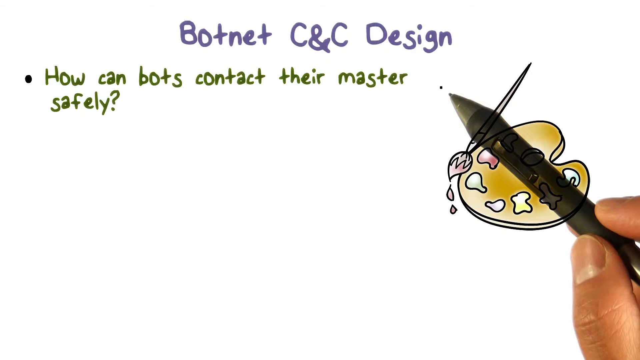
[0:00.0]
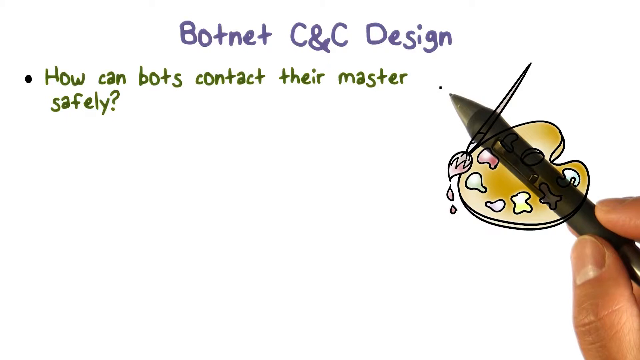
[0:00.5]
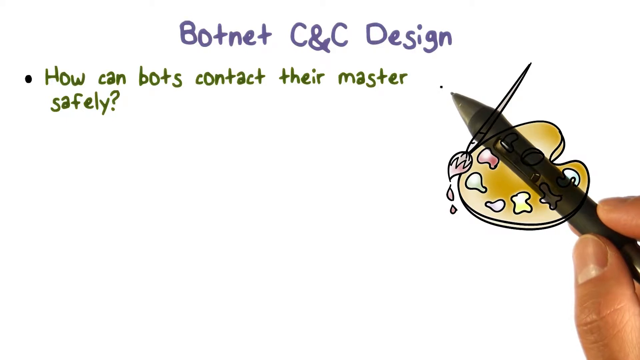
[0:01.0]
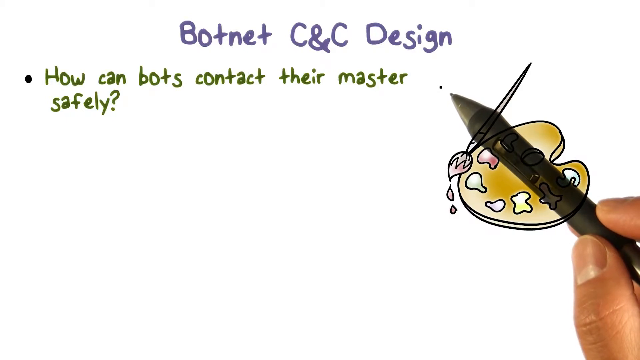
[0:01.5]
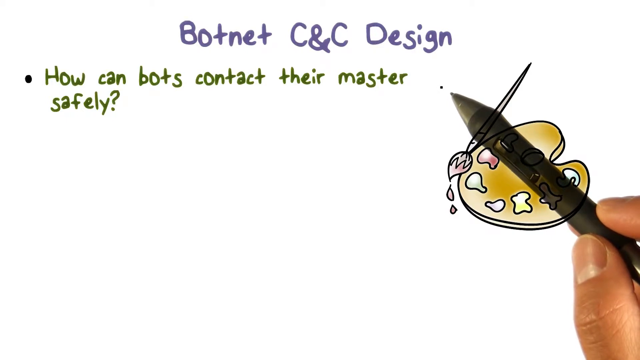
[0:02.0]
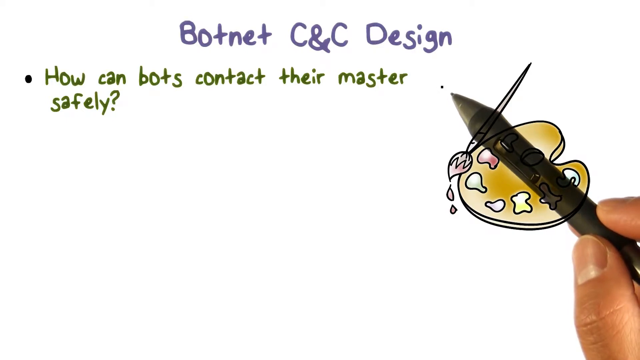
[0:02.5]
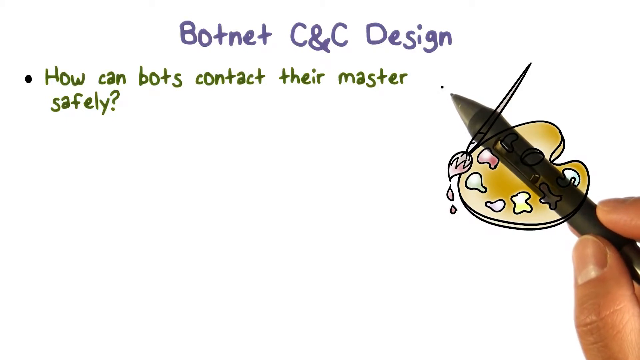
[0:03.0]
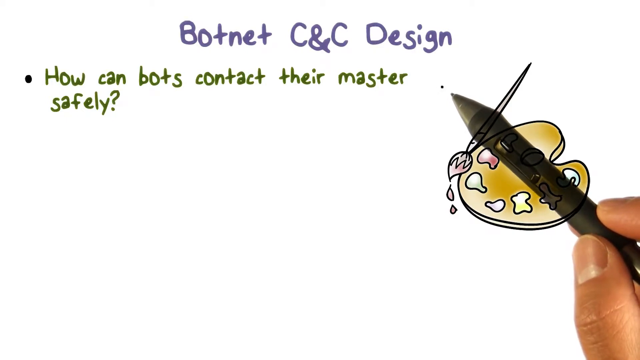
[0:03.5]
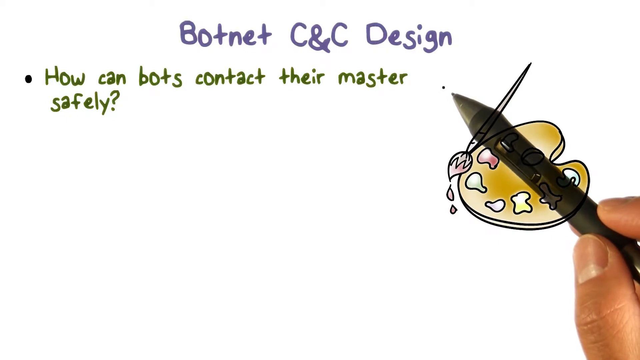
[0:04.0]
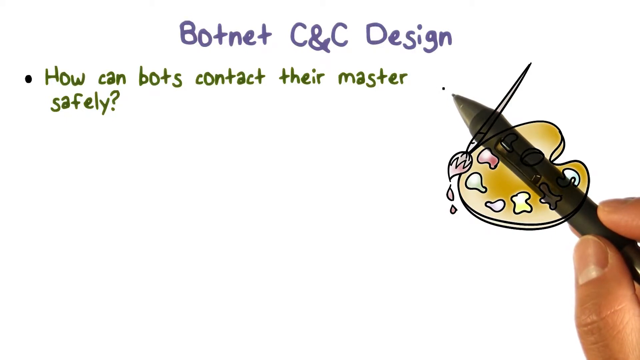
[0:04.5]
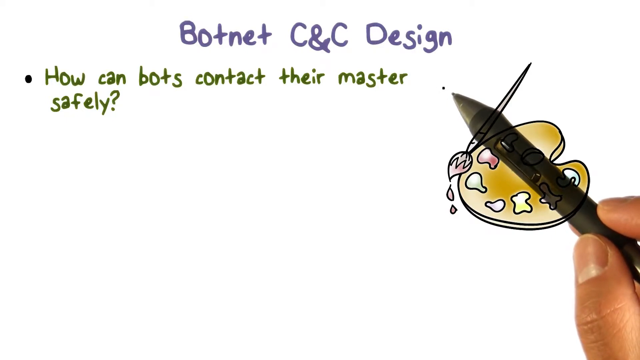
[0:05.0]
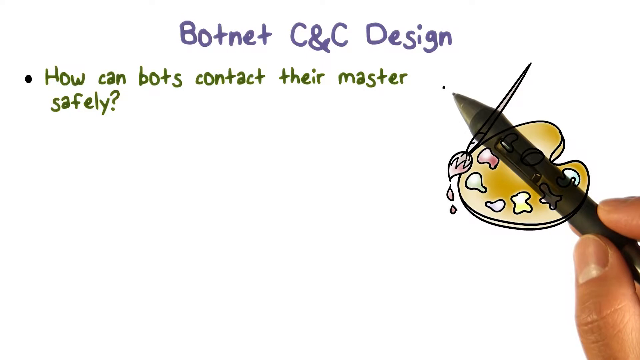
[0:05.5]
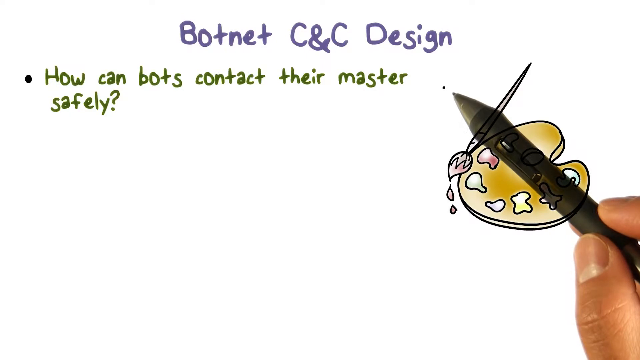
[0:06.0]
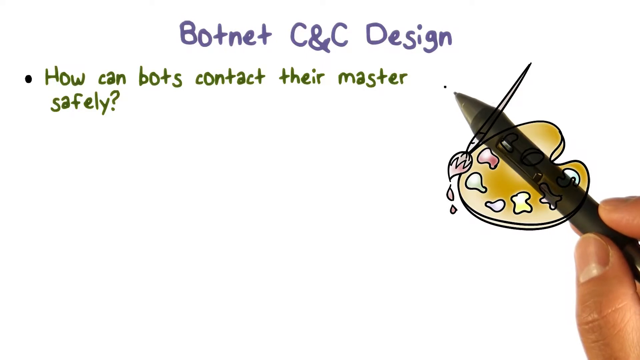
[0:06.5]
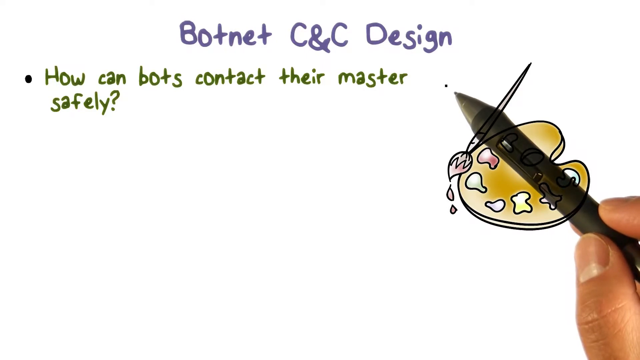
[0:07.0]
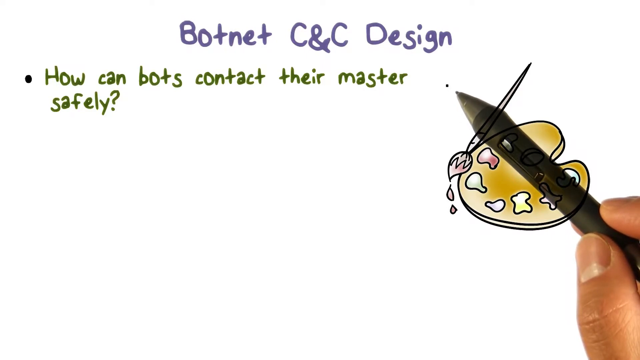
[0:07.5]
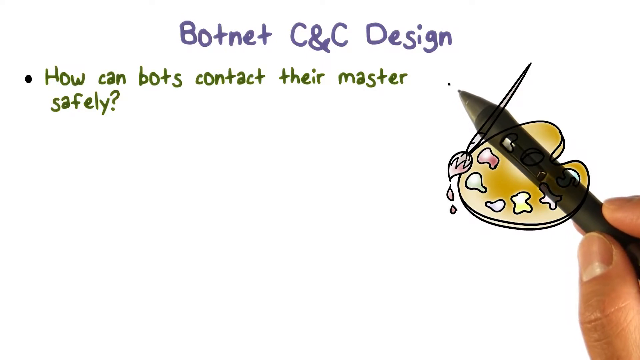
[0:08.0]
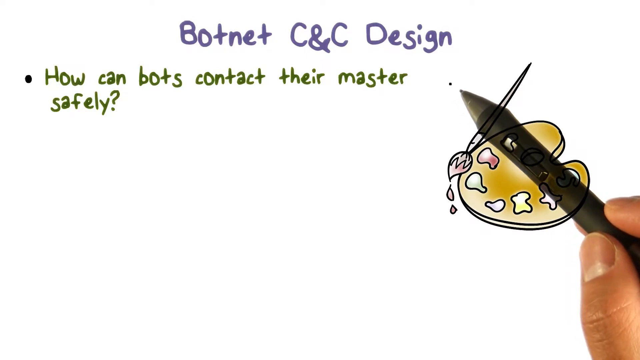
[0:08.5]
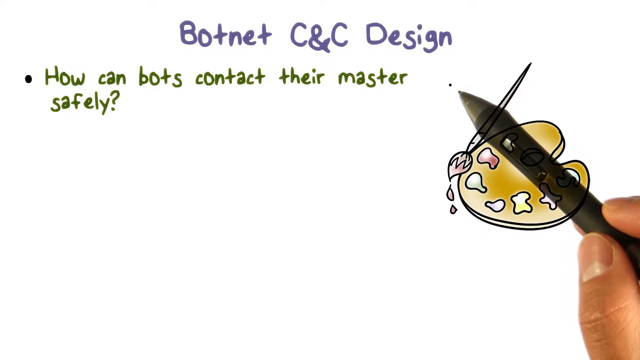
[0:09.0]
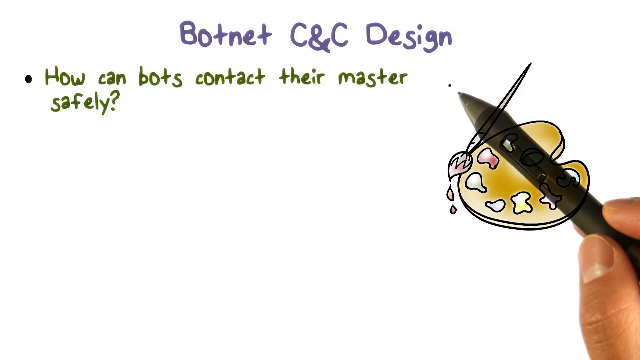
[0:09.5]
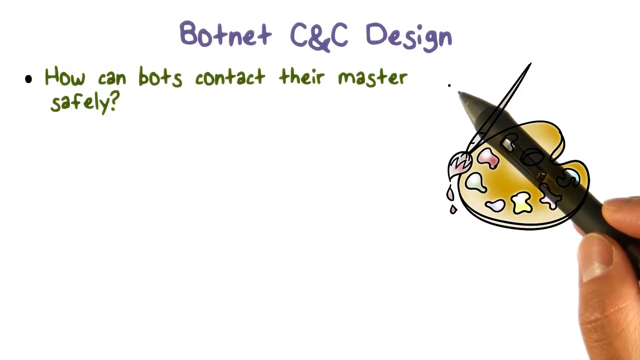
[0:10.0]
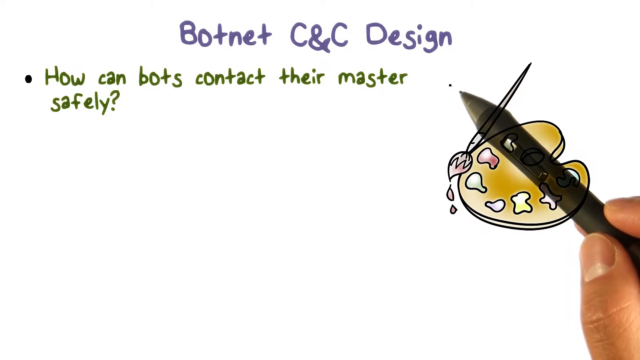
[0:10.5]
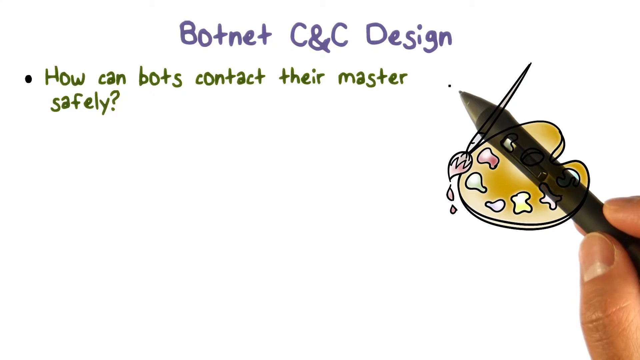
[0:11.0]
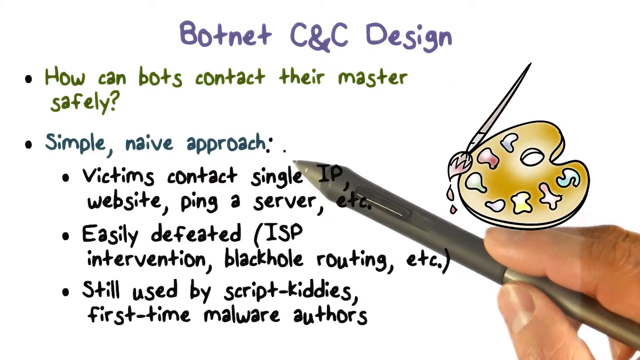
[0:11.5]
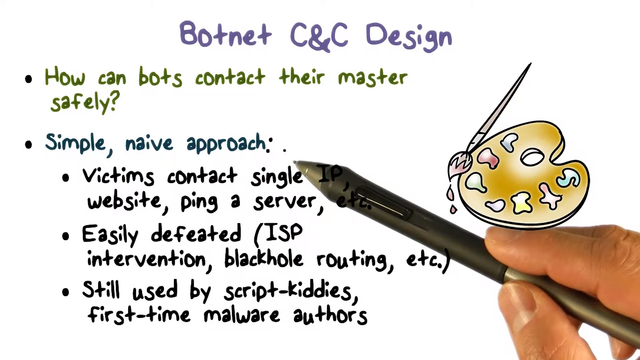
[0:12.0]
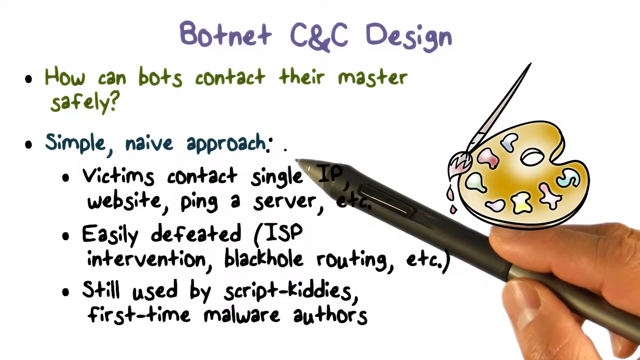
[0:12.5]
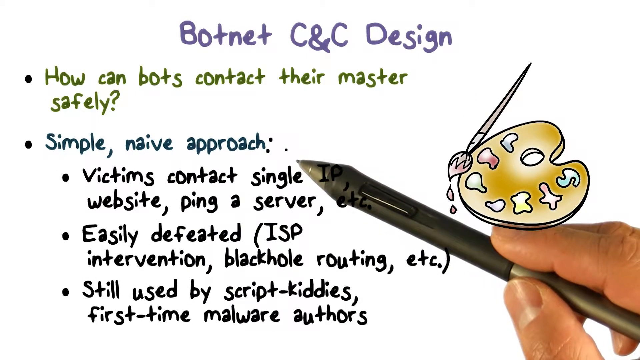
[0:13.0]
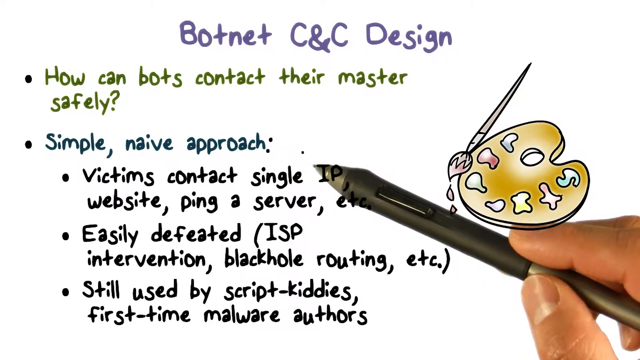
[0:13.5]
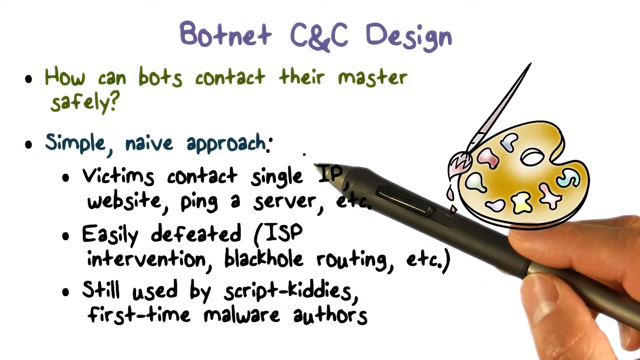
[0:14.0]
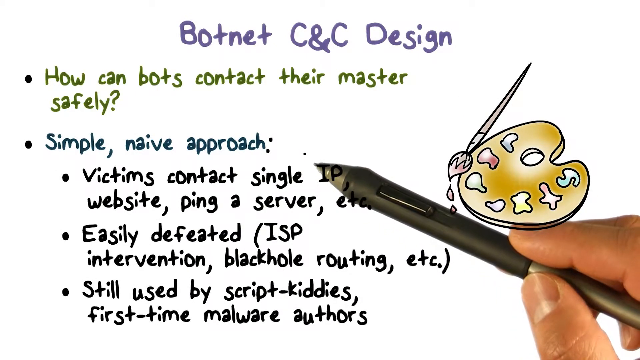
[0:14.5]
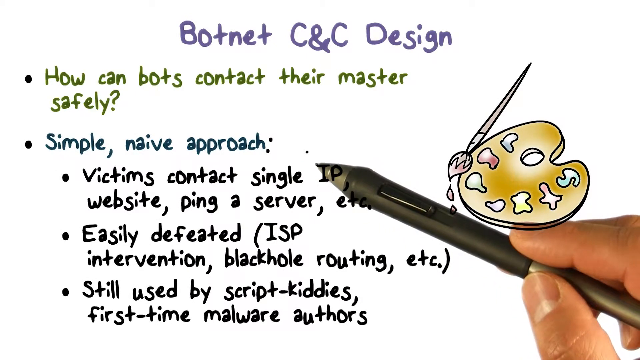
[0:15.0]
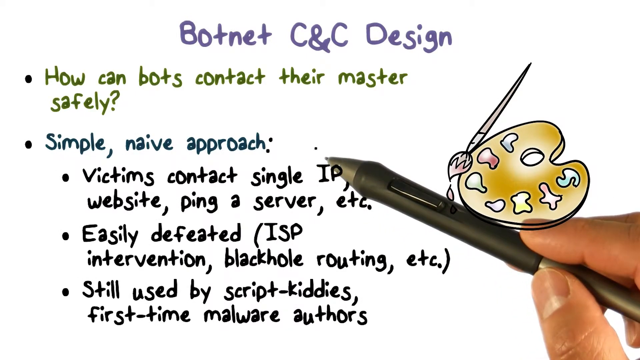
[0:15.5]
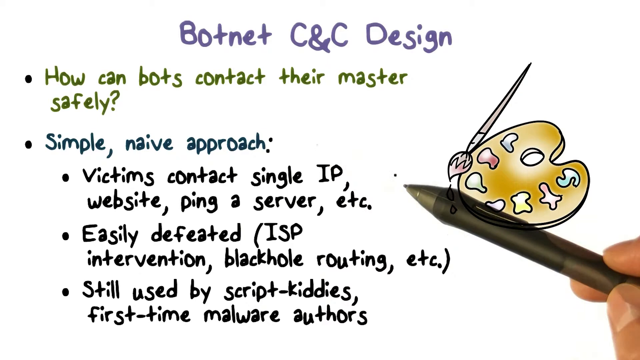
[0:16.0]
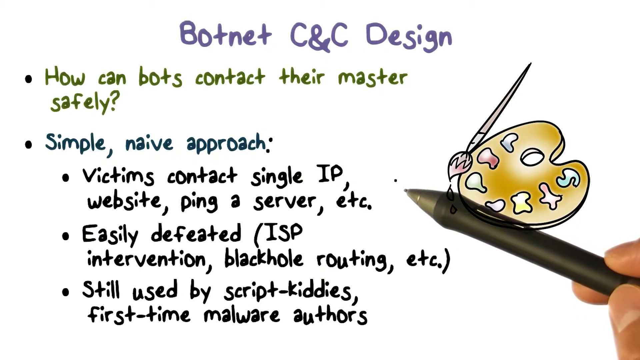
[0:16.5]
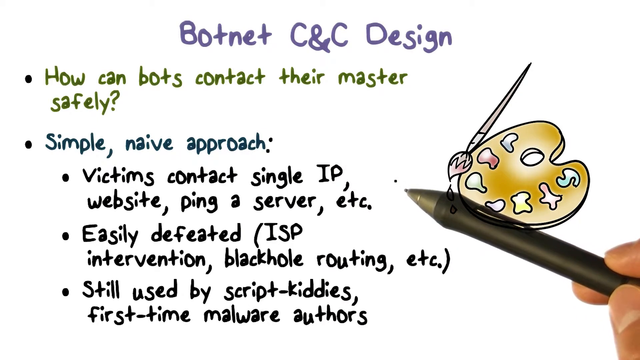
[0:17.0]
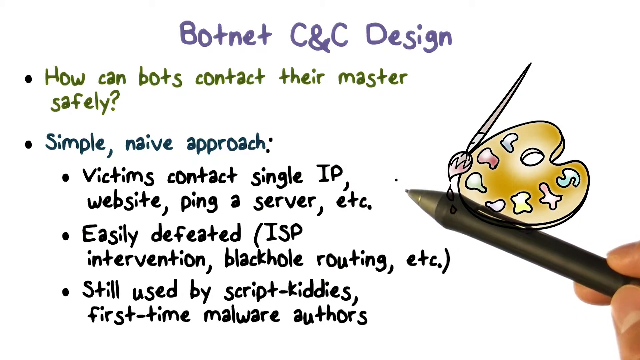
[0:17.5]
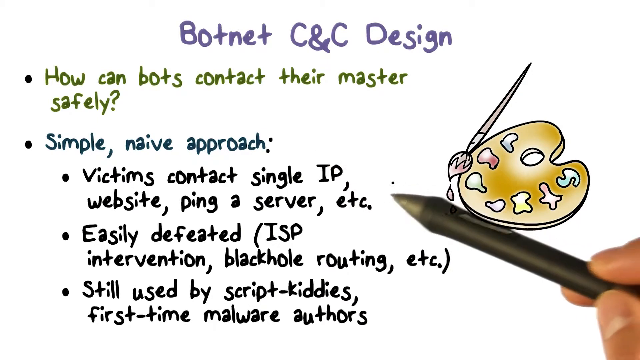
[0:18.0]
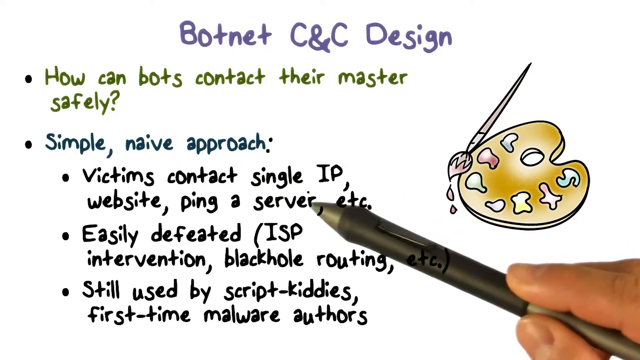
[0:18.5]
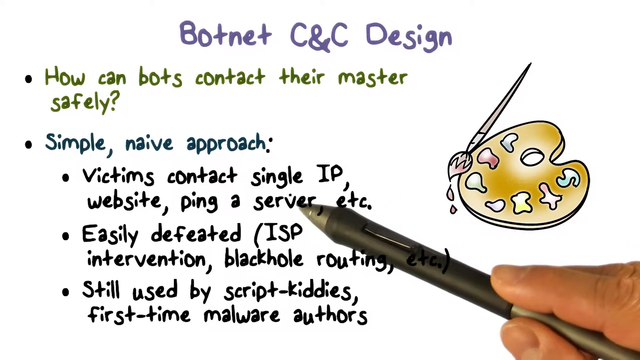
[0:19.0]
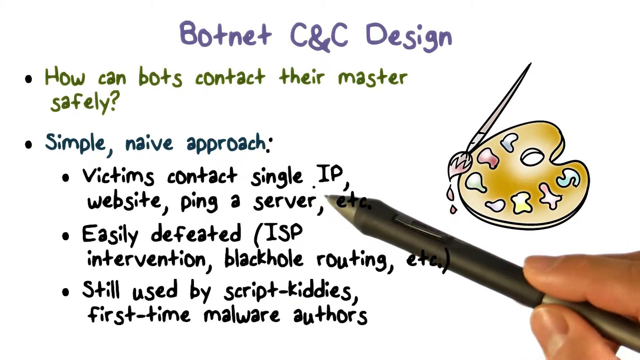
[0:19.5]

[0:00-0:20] A slide-like image reads "Botnet CNC Design." At the bottom right of the screen are some fingers and what looks like a pen, covering up a portion of the screen, which shows an easel and a brush with different paint colors presented on it. Below the title, green text reads "how can bots contact their masters safely?" The hand at the bottom right shakes slowly with the pen in hand, and a small pointer is on the screen. The video cuts briefly and reappears with the hand moved over with the pen, highlighting new text that has appeared on the screen. In blue text it reads "simple naive approach," and below it are three points, all in black: "Victims contact single website ping a server," "easily defeated ISP intervention, black hole routing, etc.," and "still used by ScriptKitties, first-time malware authors." The fingers and the highlighting pen go through the bullet points, putting the clicker over them.